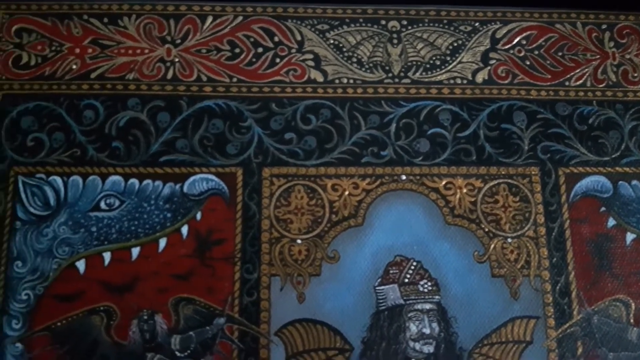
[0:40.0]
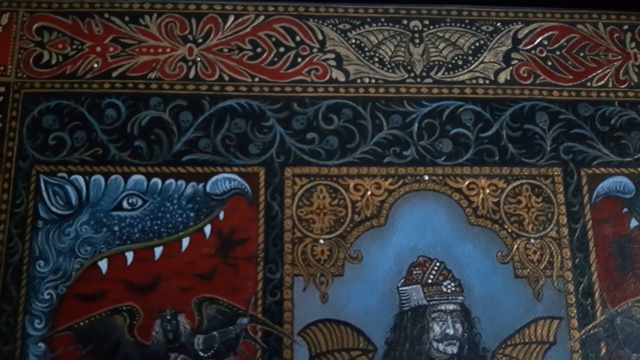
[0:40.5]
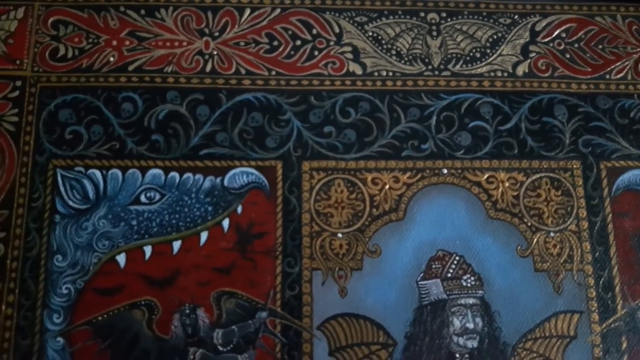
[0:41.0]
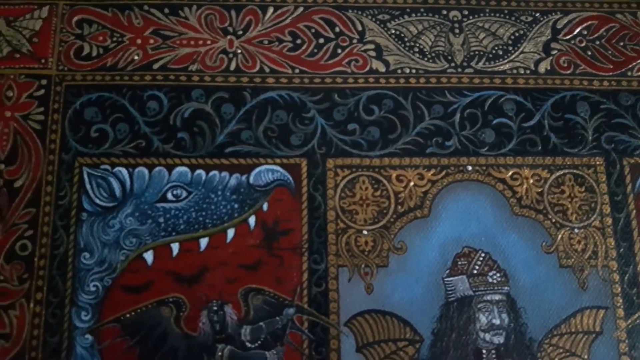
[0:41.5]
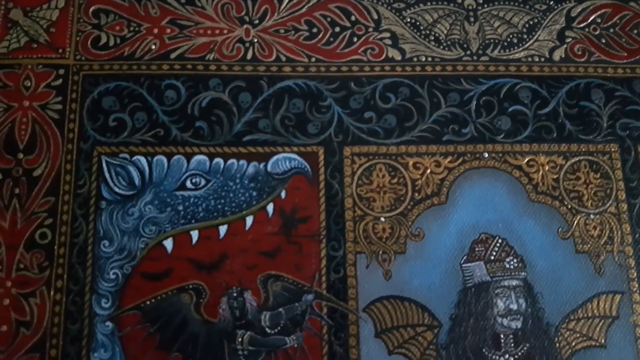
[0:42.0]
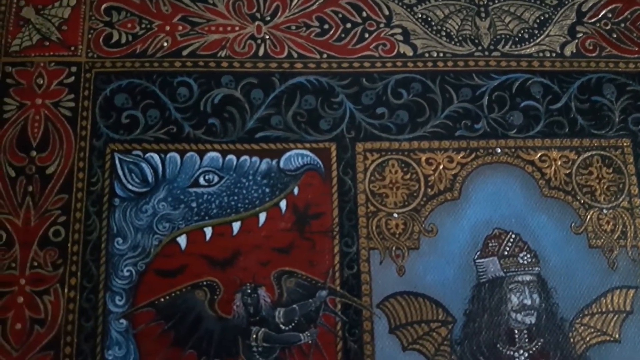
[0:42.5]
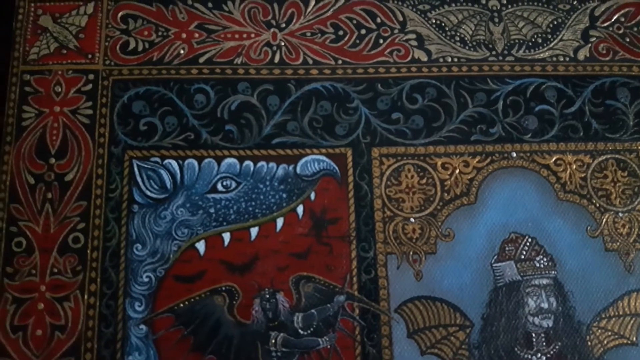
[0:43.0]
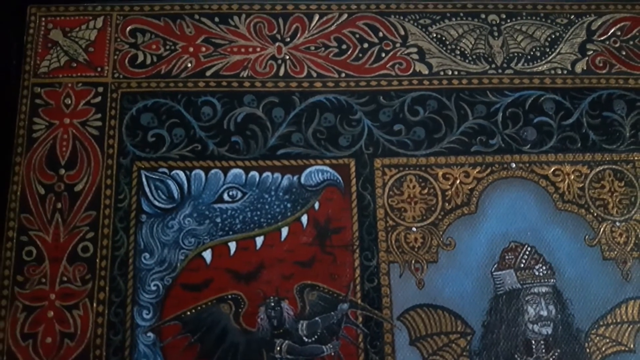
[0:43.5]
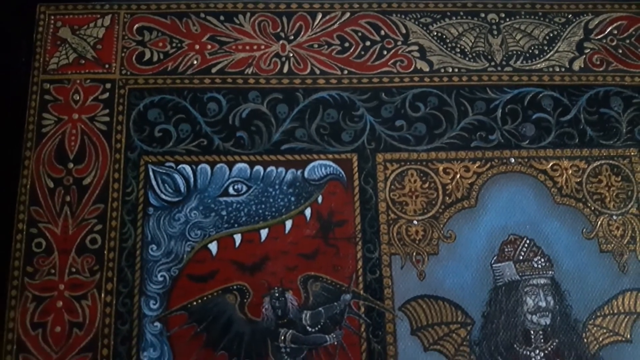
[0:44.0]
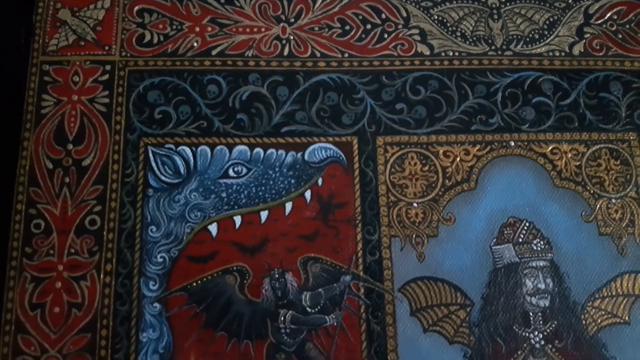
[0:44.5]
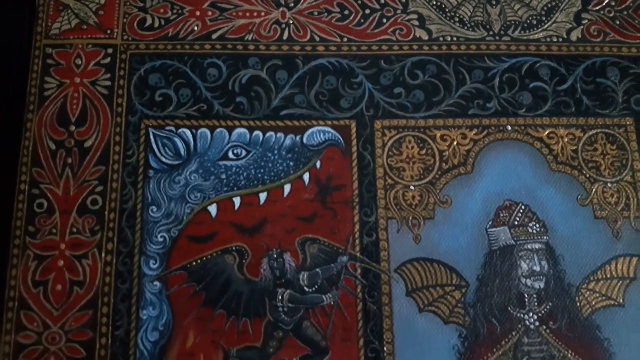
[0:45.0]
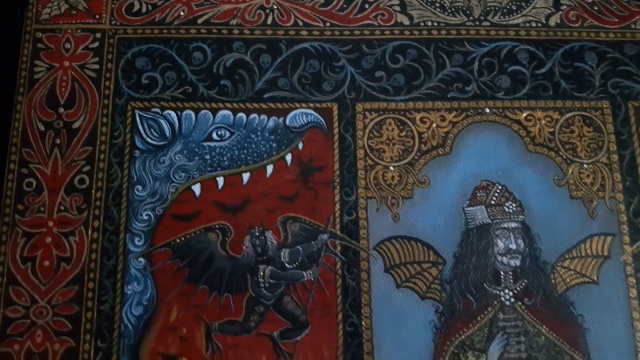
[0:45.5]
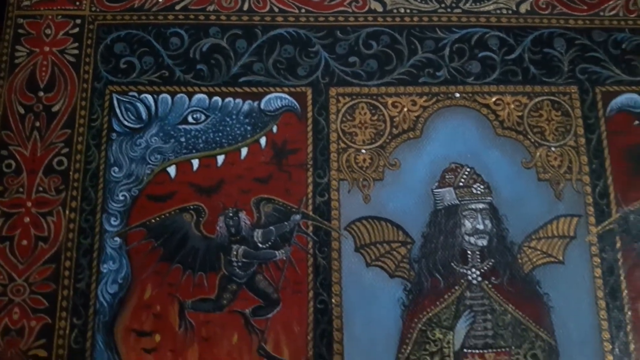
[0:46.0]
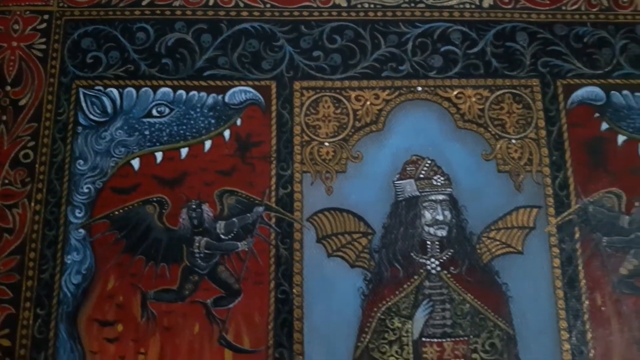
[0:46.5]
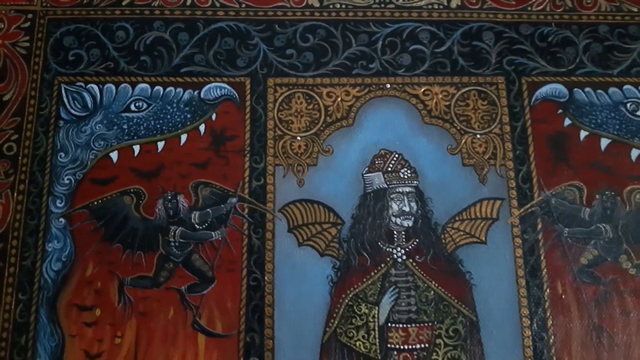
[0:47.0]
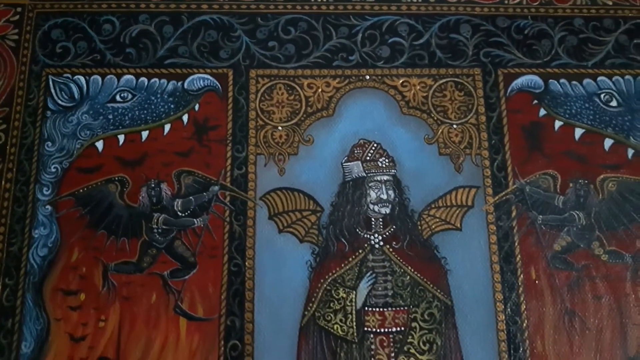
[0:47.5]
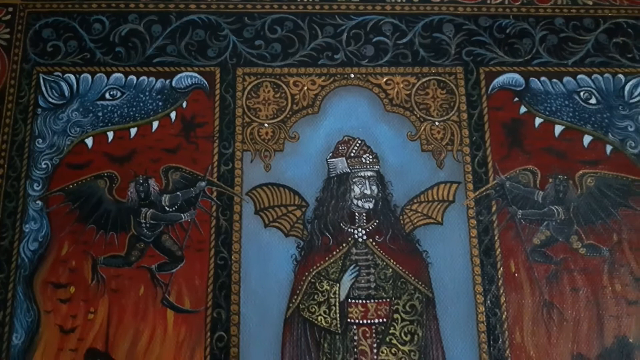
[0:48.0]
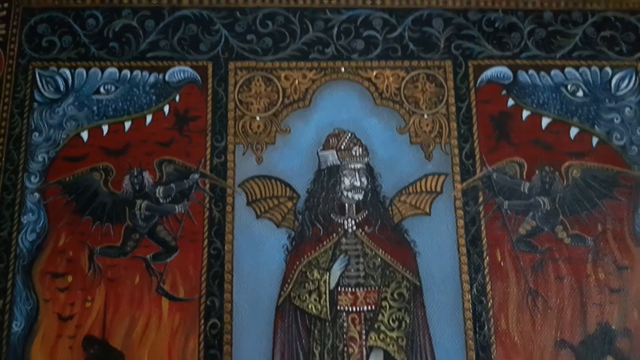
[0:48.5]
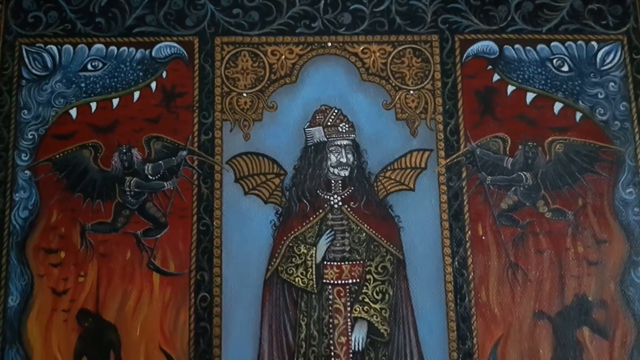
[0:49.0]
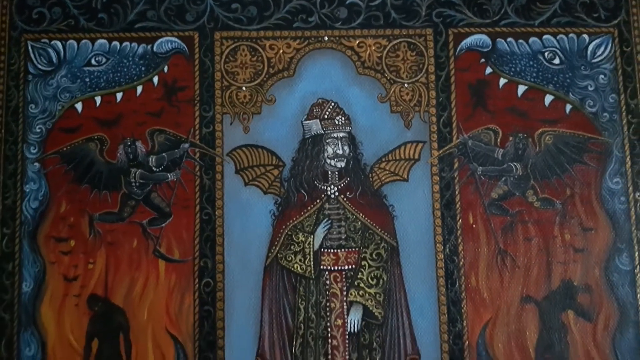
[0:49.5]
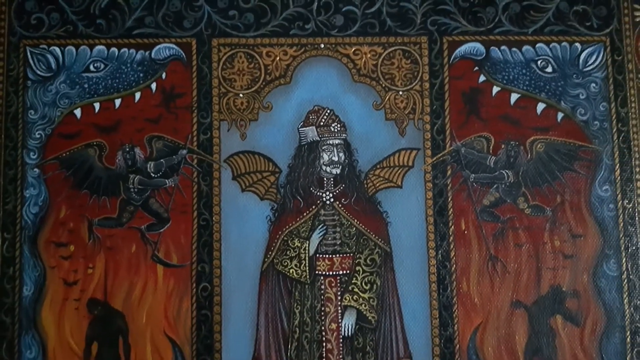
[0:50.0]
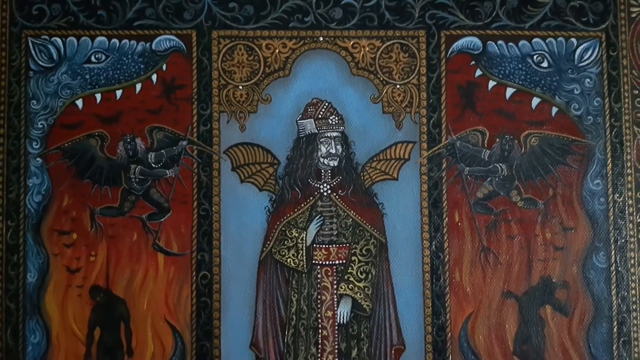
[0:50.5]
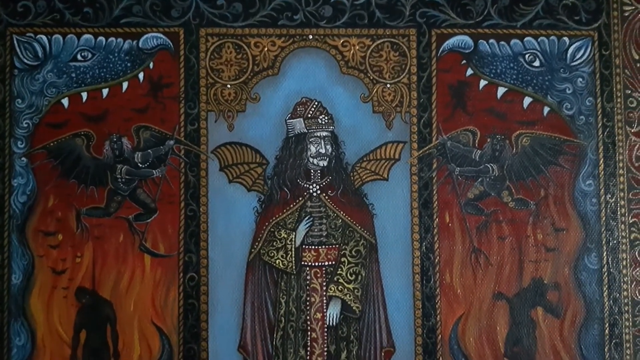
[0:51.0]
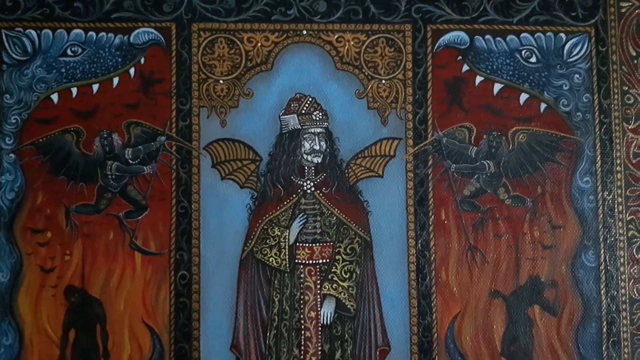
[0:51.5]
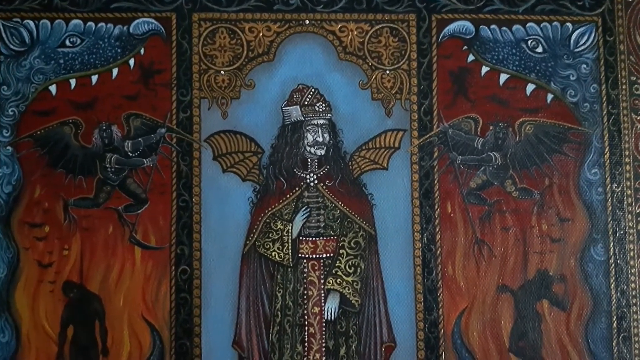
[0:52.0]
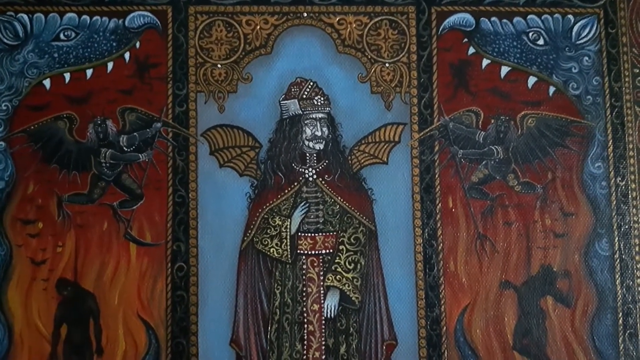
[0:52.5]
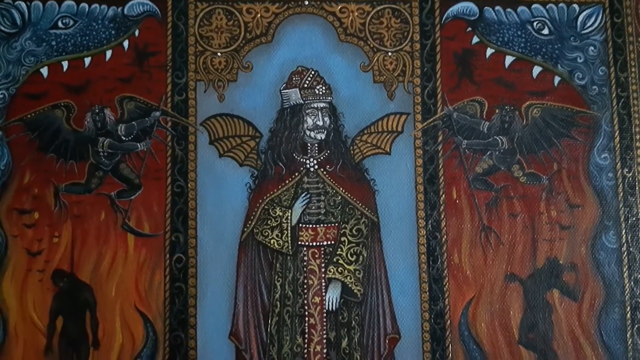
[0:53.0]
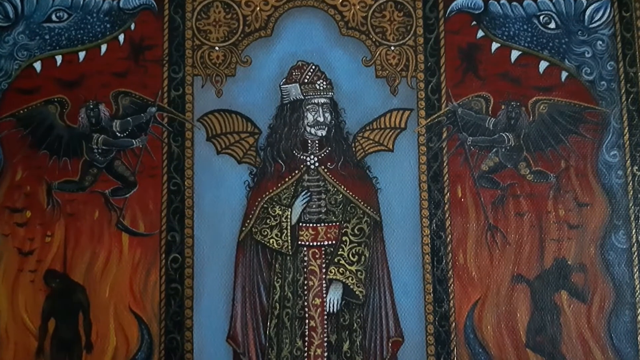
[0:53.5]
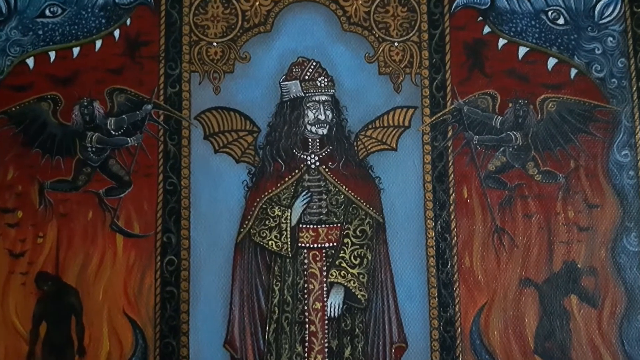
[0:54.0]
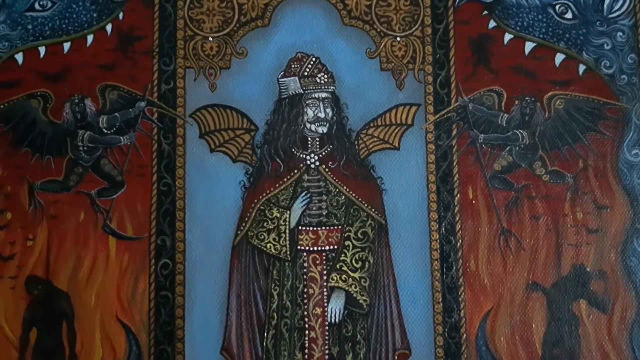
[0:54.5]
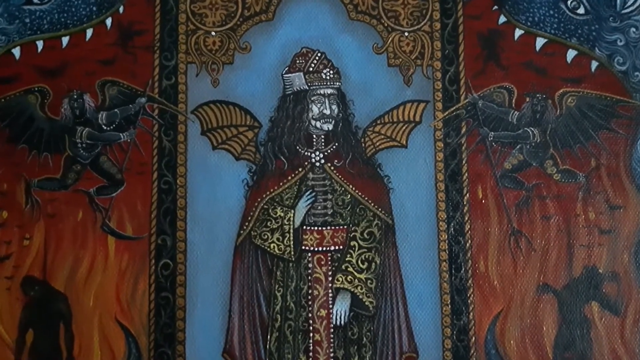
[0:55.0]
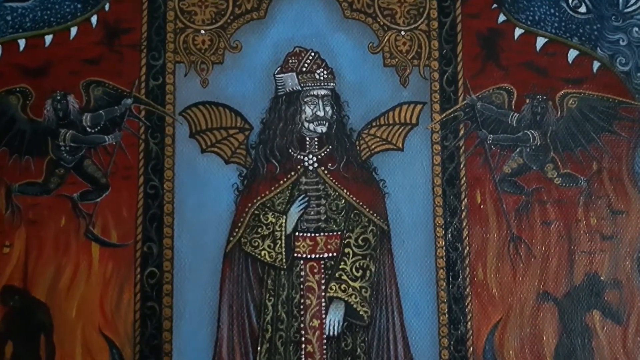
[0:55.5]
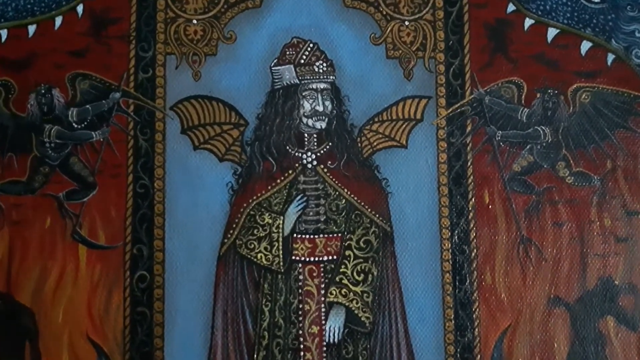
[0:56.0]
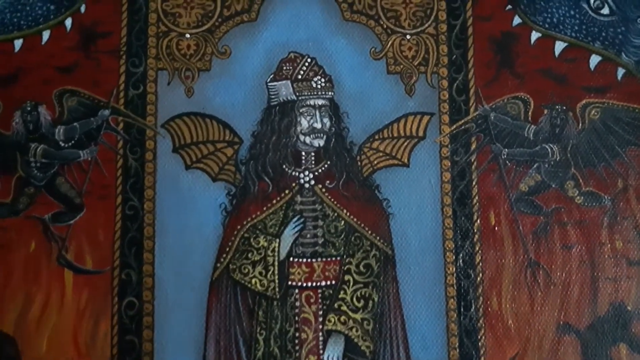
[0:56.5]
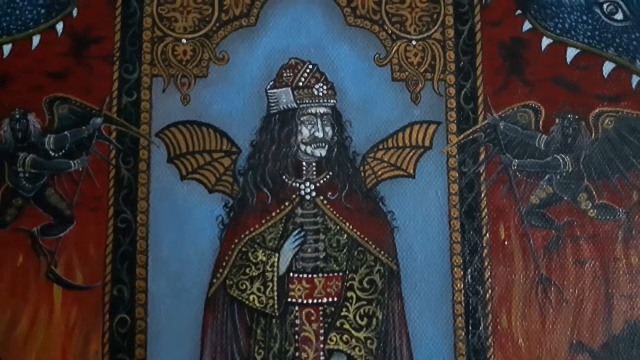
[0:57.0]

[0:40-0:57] An artistic rendering of Vladimir the Impaler, in what appears to be pearl inlay, centers on the figure of Vladimir. He wears black robes with gold inlay, a red cape around his shoulders, a red sash across the middle of his torso, and a red cap with white accents on his head. His hair is dark, he has a black mustache, and bat wings are behind his shoulders. The background behind him is light blue. Panels are visible to the left and right of Vladimir, each depicting a demon. Both panels have a large monster bordering the outside with a gaping maw, six sharp teeth visible along the top of the mouth. Their ears and noses appear to be in the style of a bat.